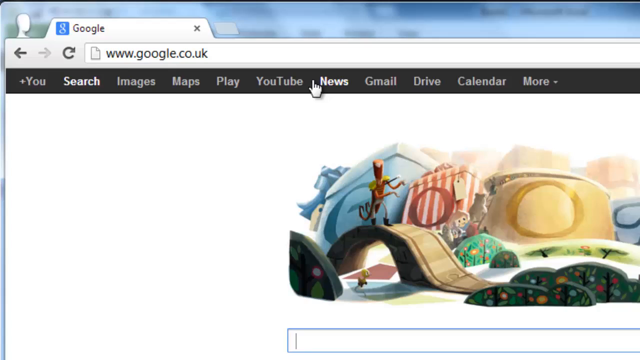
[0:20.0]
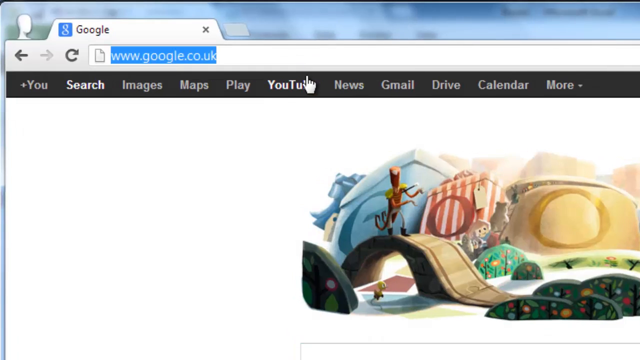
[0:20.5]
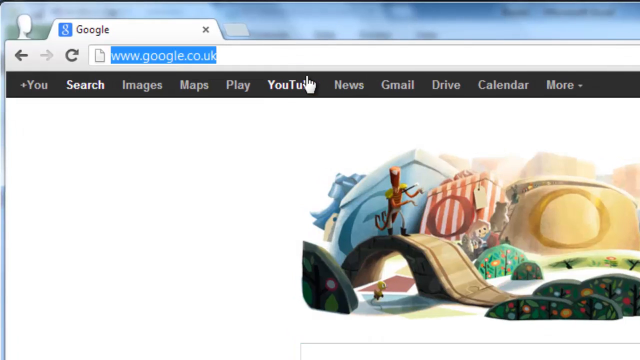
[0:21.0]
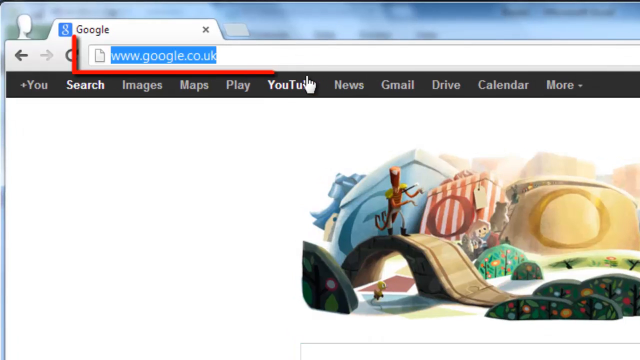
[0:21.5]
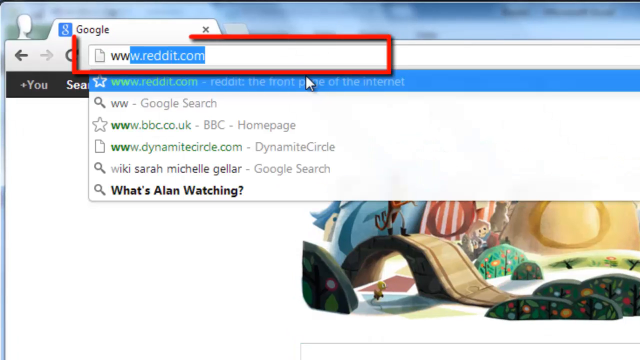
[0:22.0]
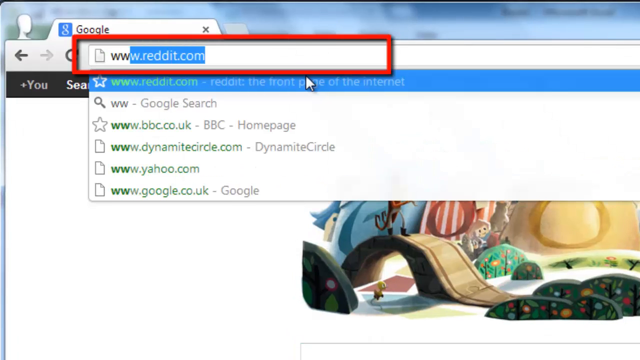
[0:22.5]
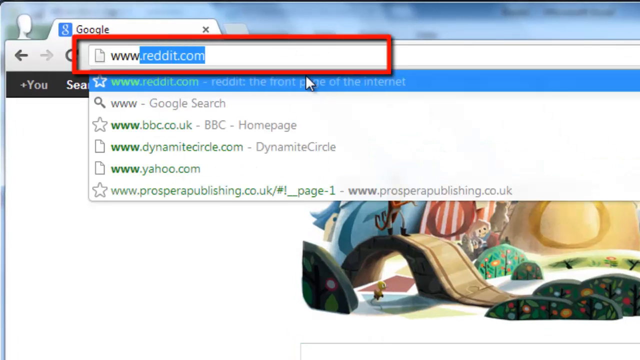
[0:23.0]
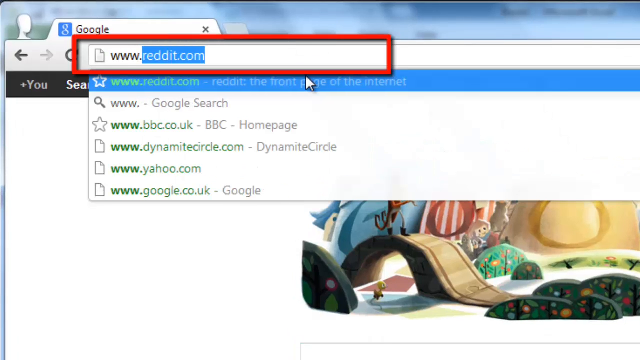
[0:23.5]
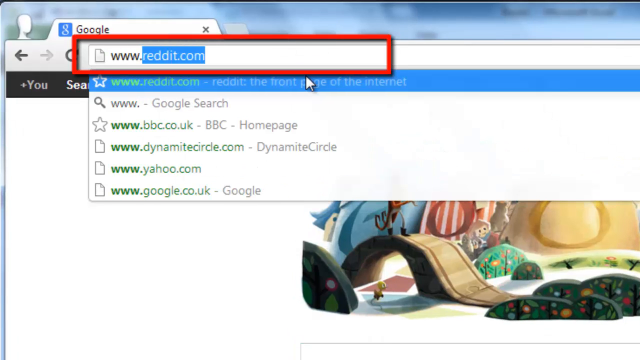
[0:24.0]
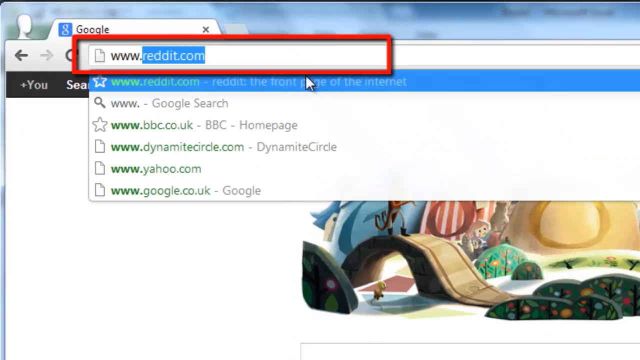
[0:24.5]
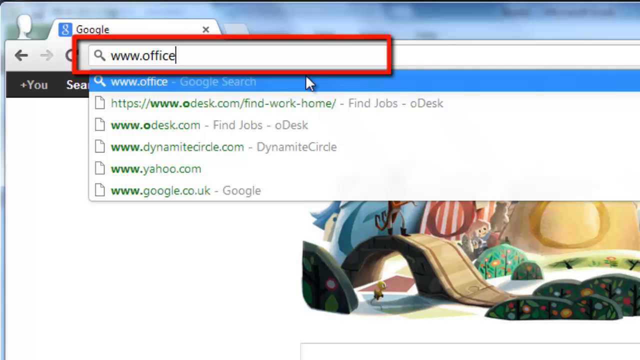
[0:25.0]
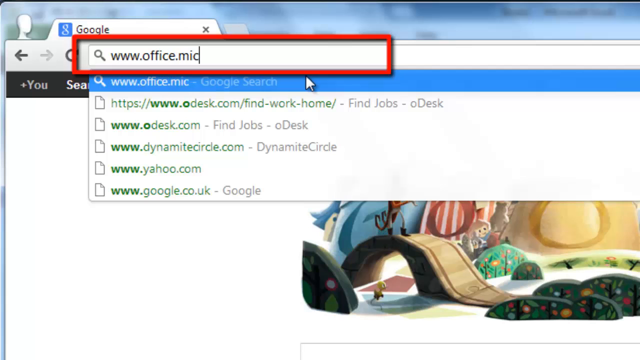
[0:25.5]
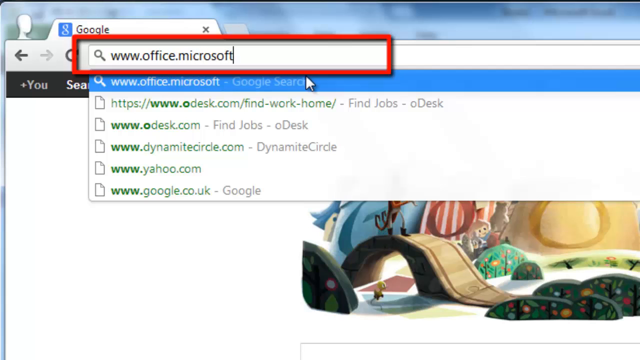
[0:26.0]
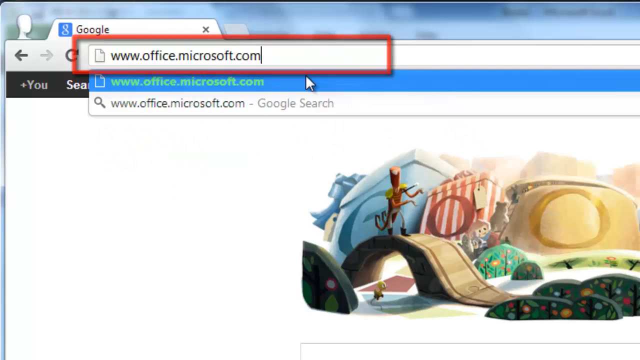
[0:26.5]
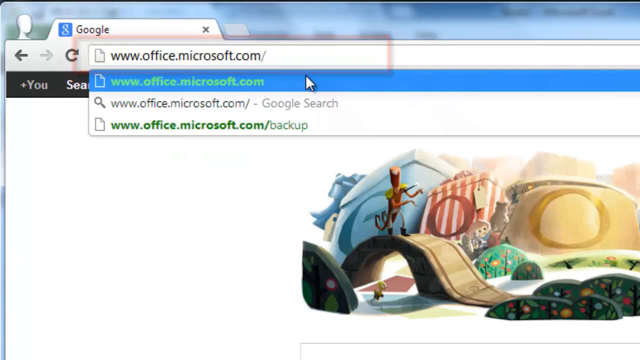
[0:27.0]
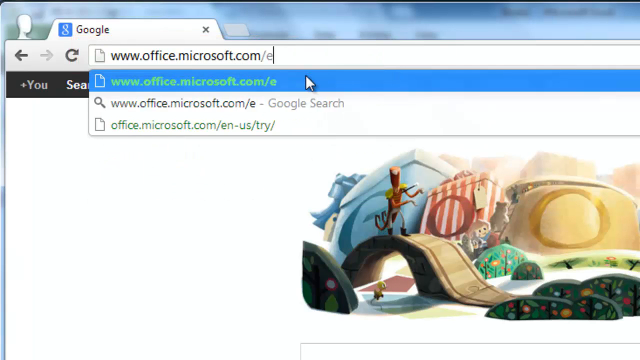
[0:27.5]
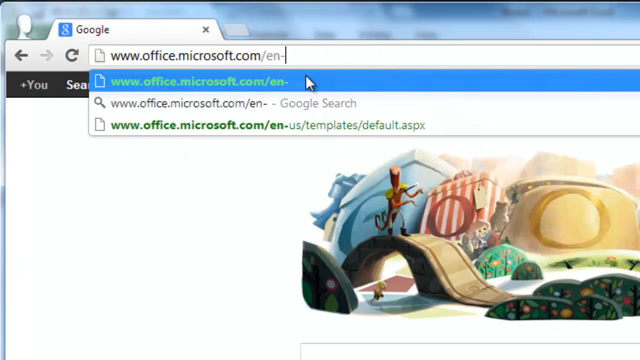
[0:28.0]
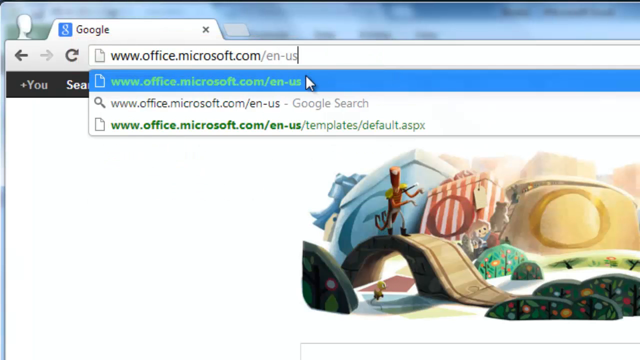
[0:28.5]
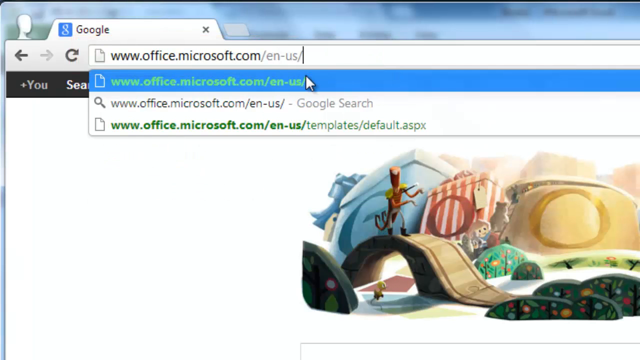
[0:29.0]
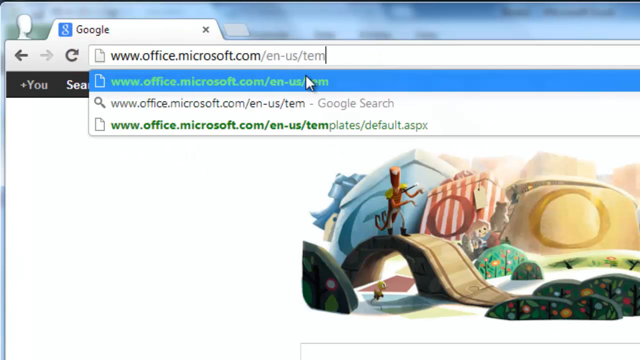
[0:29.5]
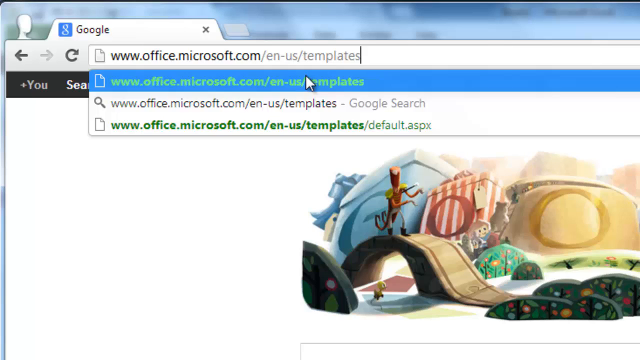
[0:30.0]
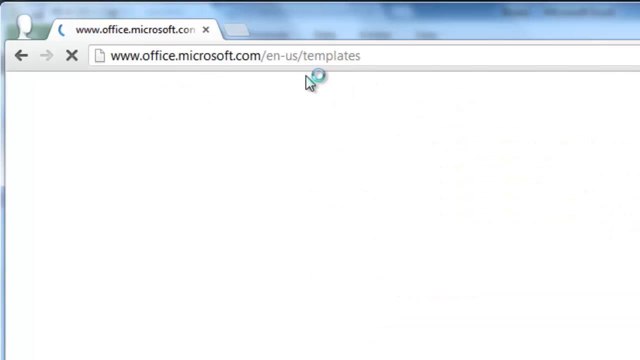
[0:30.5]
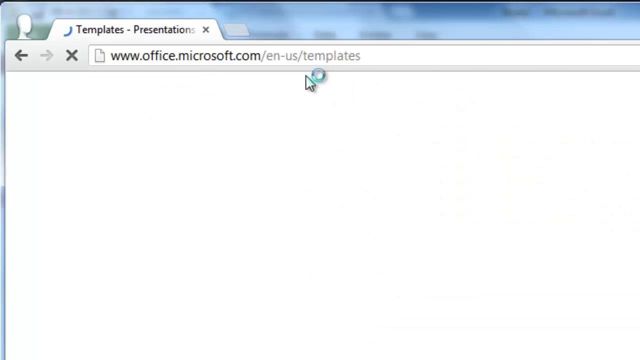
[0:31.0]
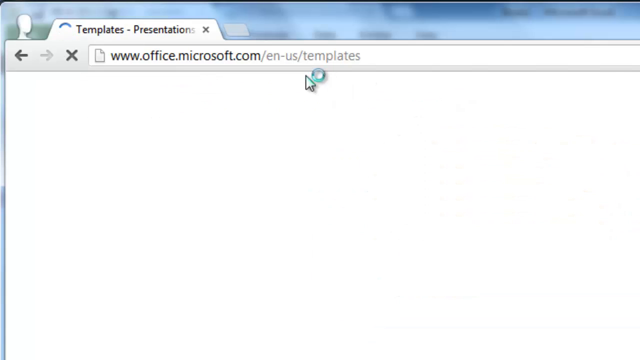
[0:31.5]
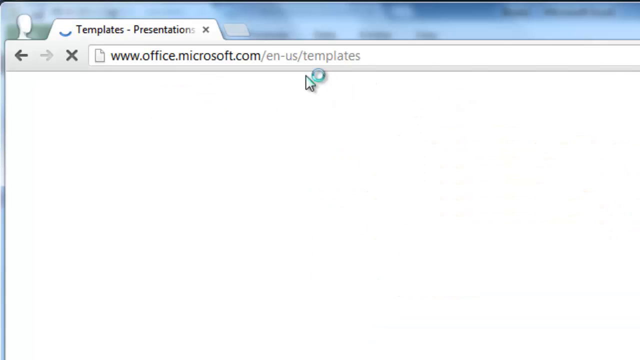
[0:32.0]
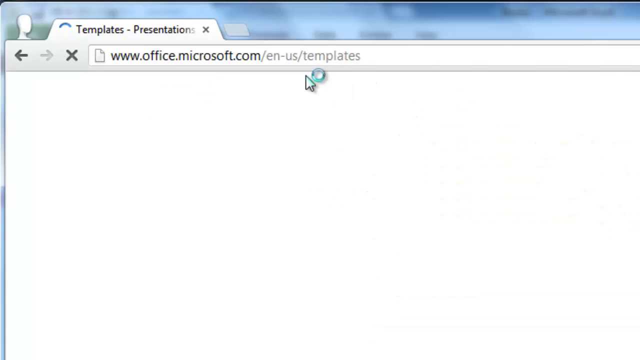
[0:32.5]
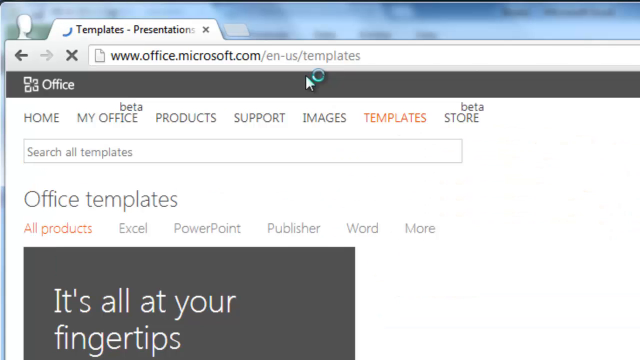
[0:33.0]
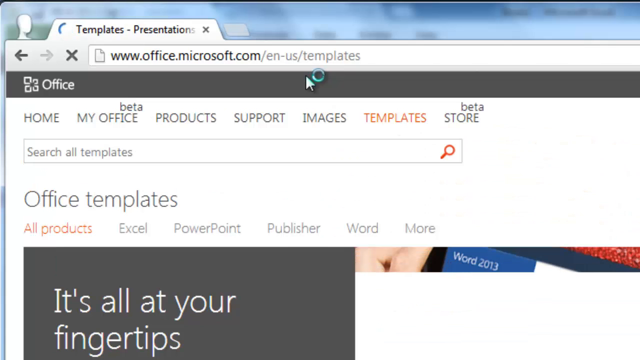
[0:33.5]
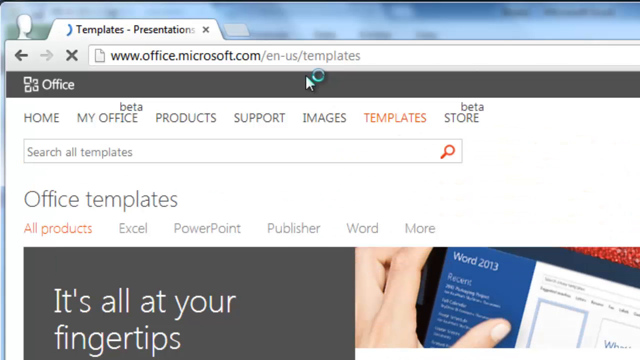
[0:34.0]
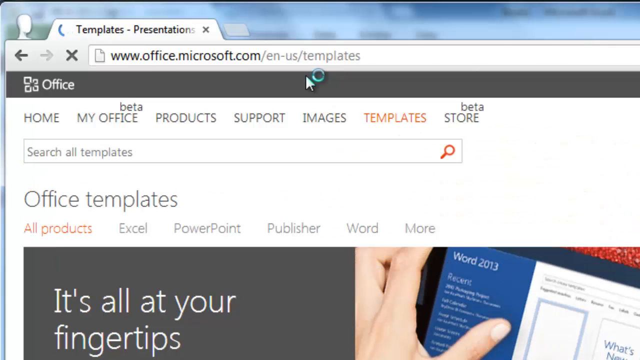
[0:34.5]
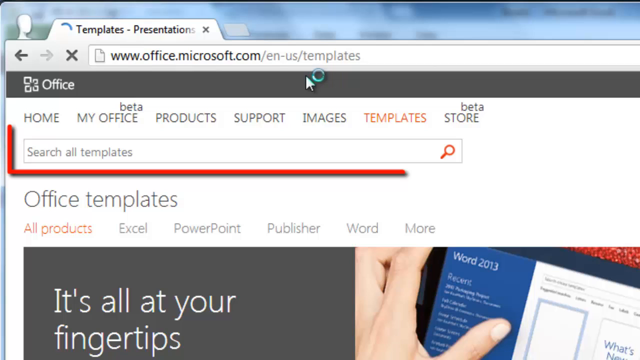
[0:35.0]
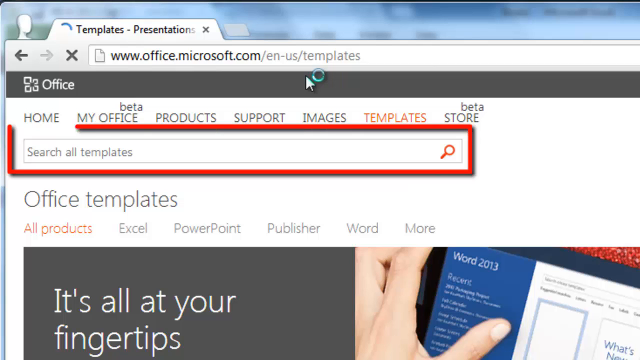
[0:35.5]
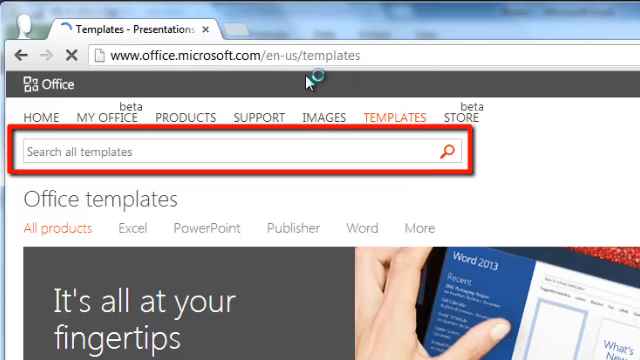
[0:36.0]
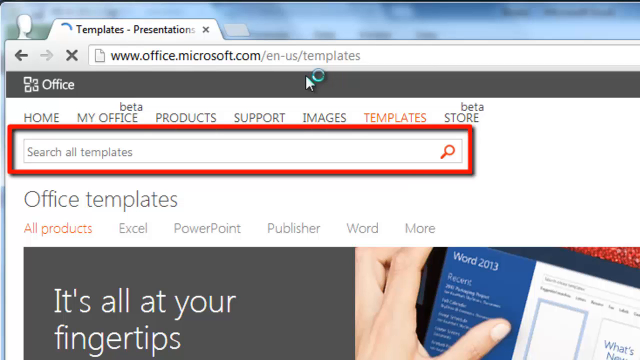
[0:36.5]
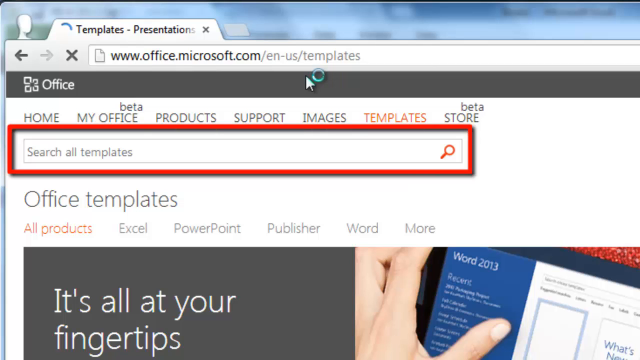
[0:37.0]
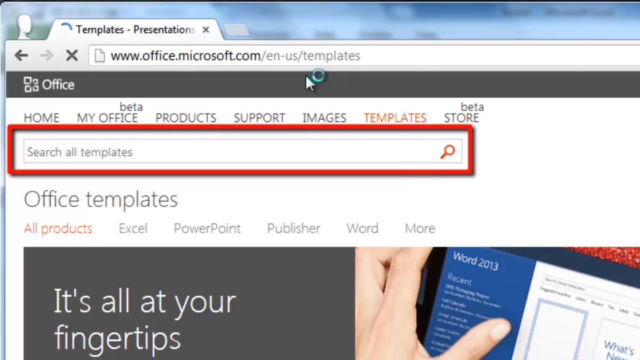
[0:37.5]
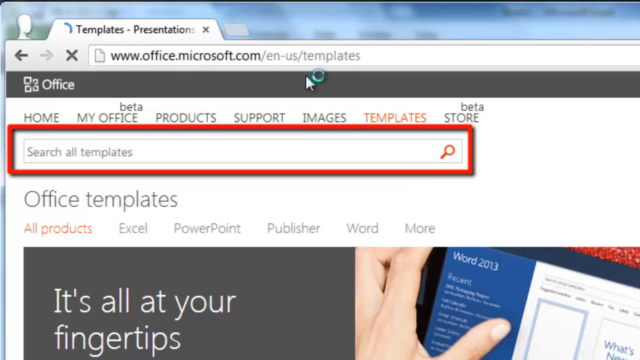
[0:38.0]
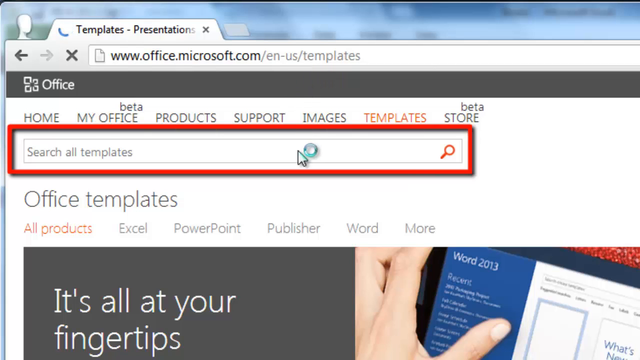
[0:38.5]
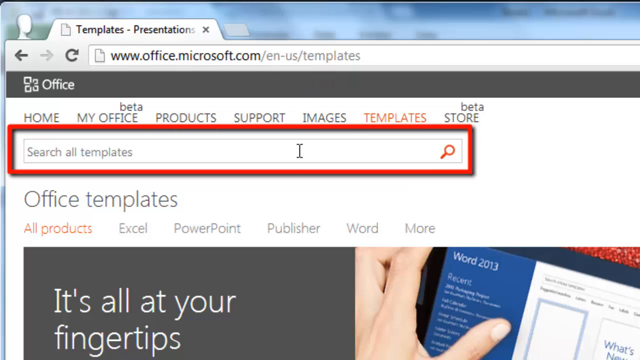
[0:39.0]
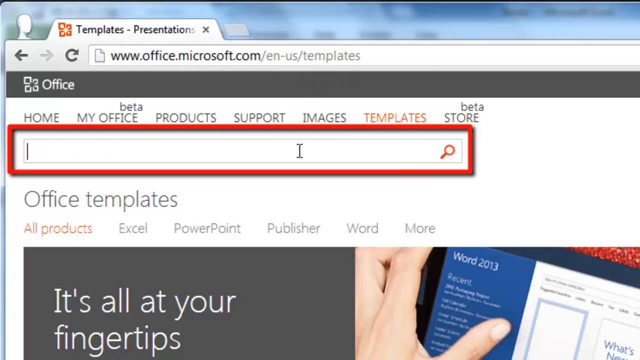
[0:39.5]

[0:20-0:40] A browser shows the website www.google.co.uk. The person types www.office.microsoft.com/templates into the blank address space, and a "search all templates" field is visible. Red lines mark parts of the screen, and the view zooms in on what the person wants shown. The resolution is high enough for all the information on screen to be readable.